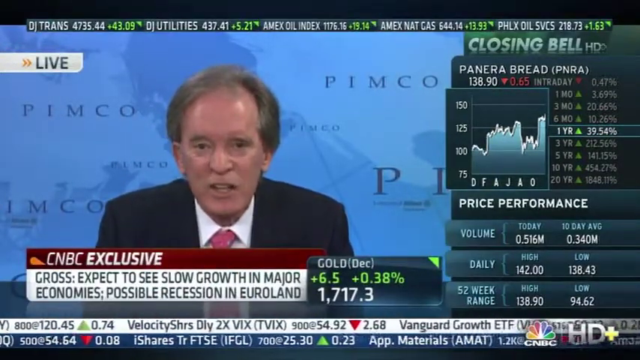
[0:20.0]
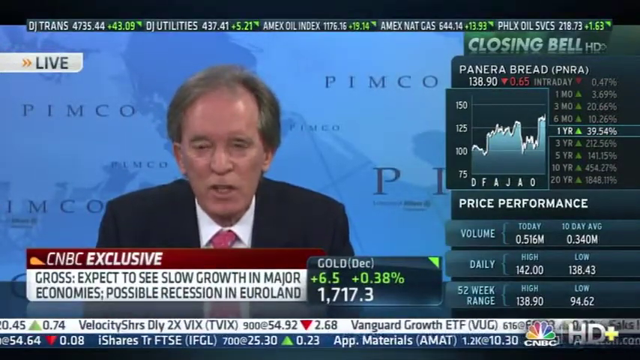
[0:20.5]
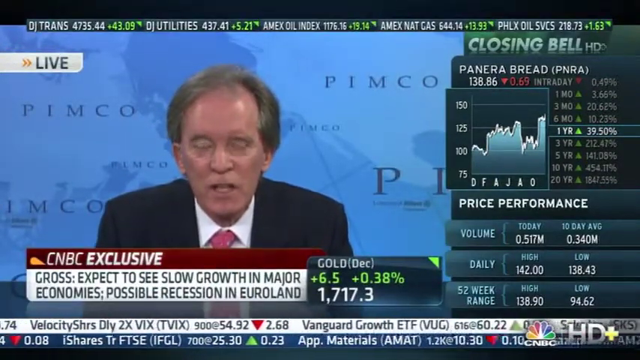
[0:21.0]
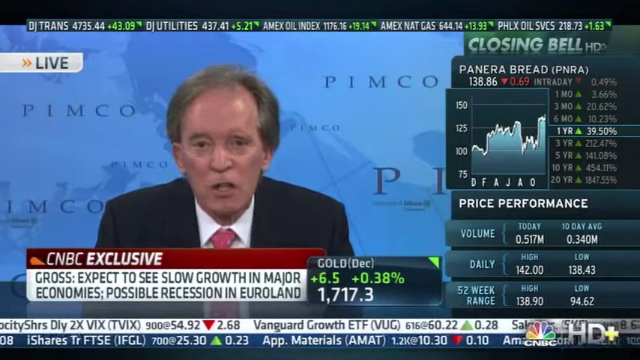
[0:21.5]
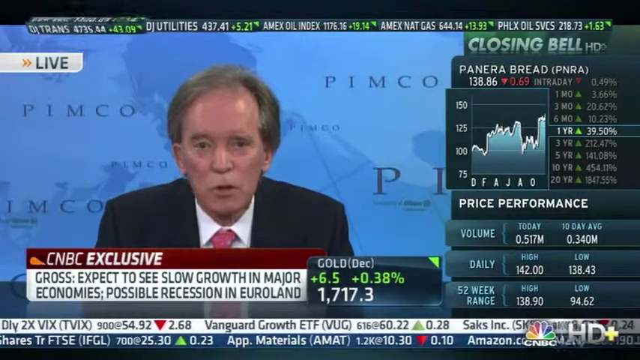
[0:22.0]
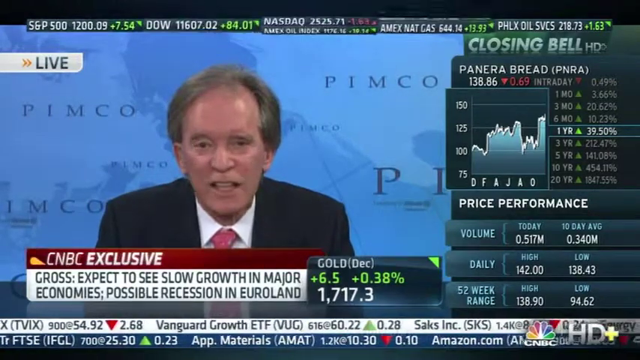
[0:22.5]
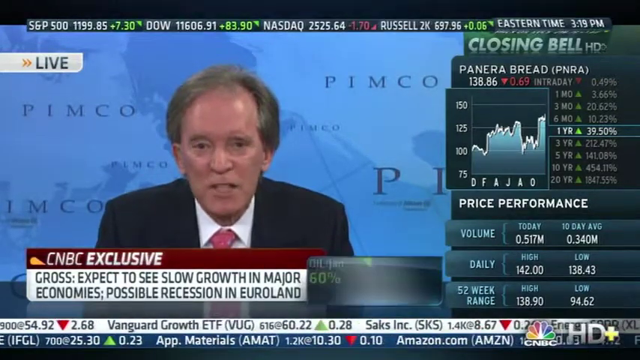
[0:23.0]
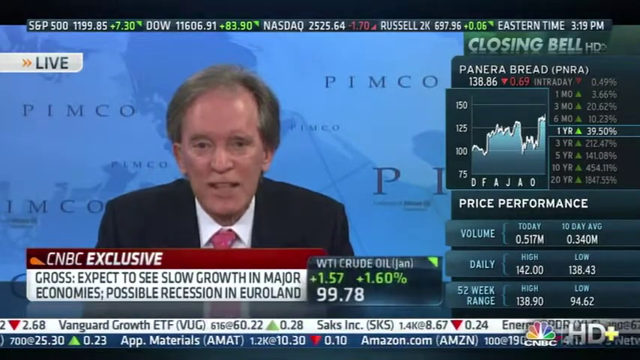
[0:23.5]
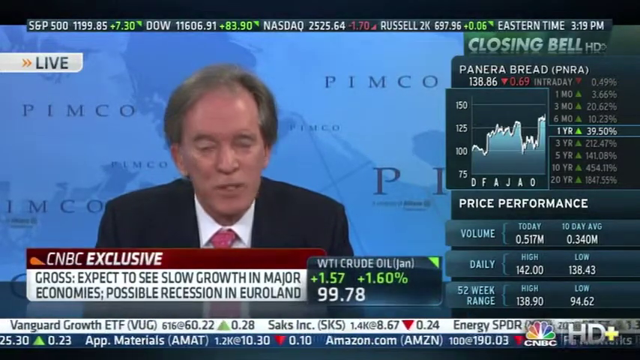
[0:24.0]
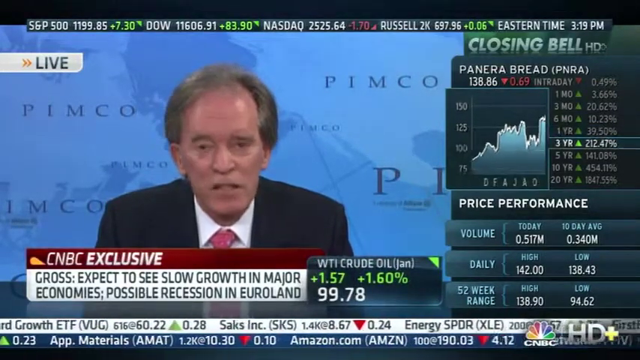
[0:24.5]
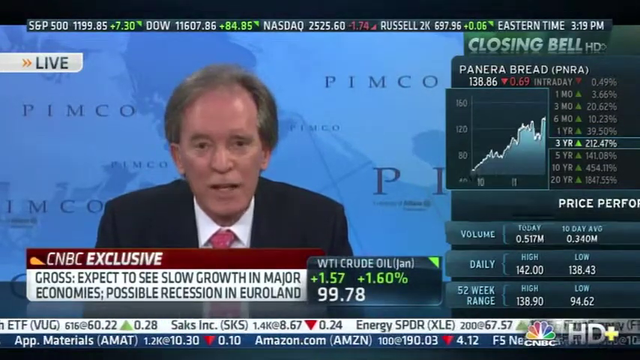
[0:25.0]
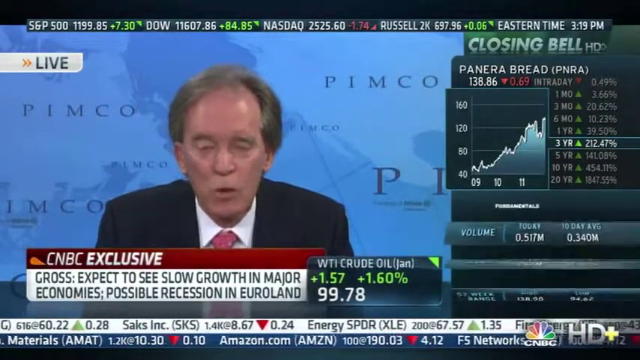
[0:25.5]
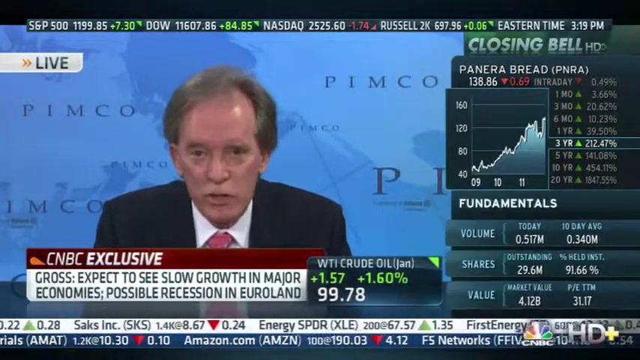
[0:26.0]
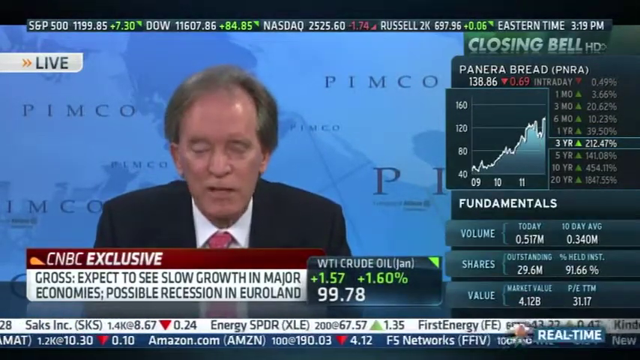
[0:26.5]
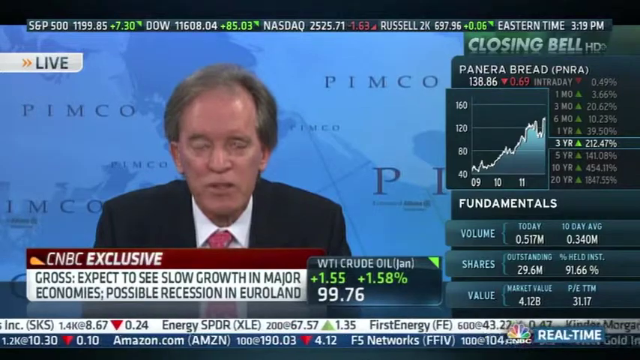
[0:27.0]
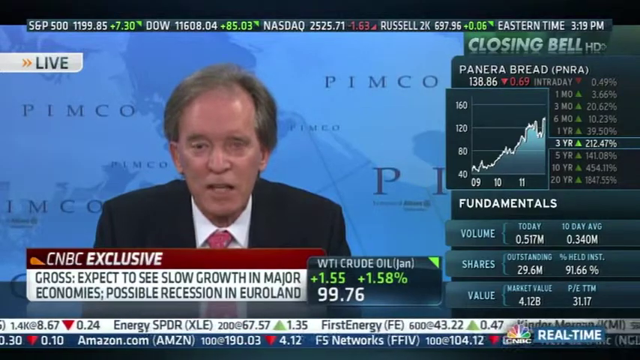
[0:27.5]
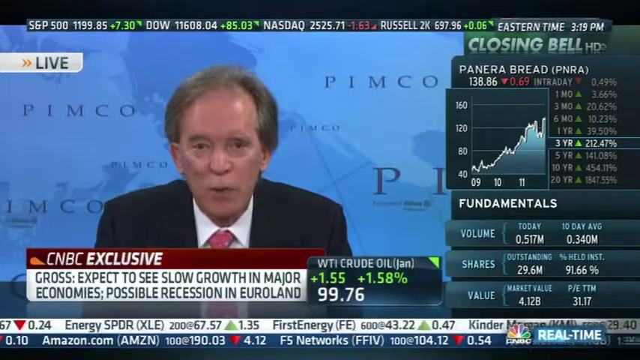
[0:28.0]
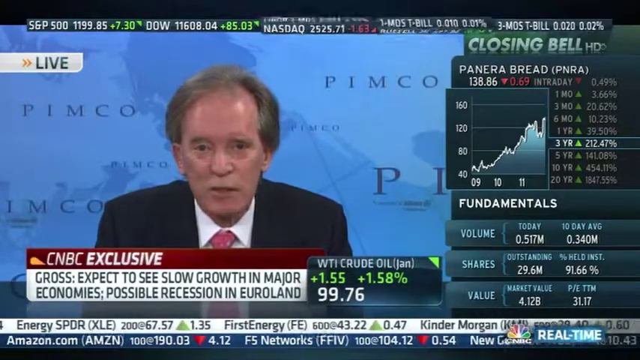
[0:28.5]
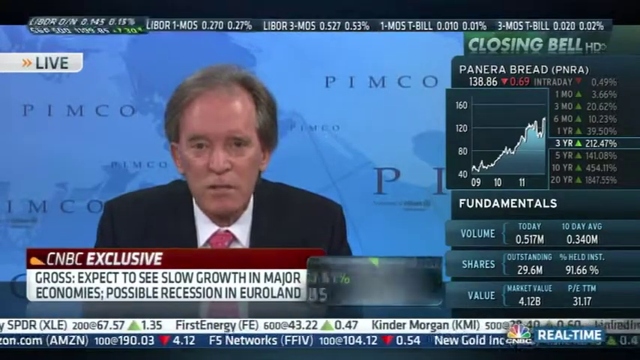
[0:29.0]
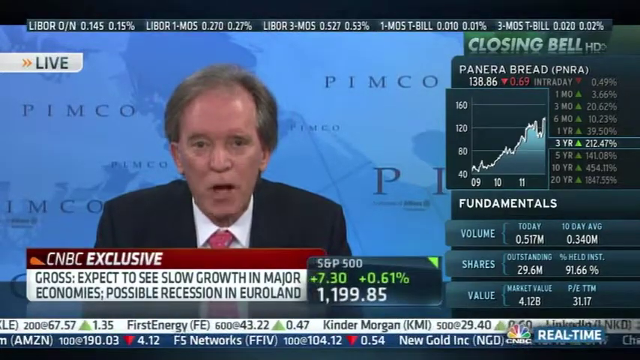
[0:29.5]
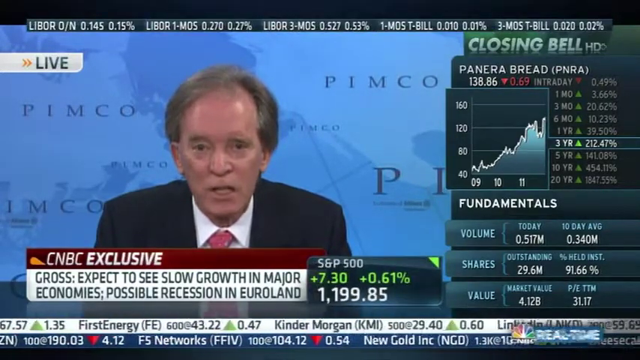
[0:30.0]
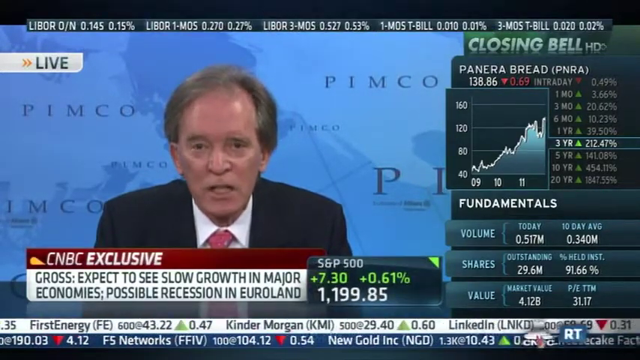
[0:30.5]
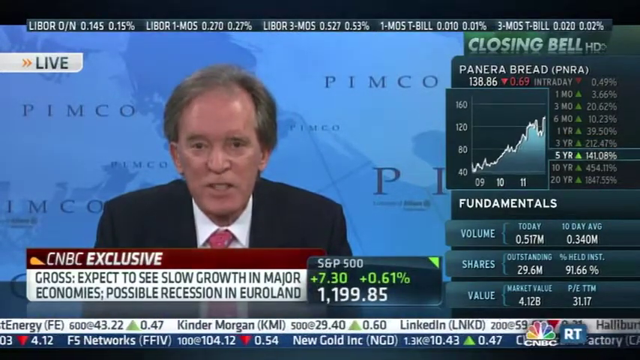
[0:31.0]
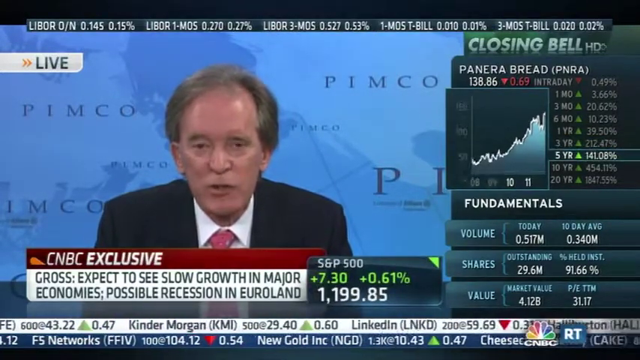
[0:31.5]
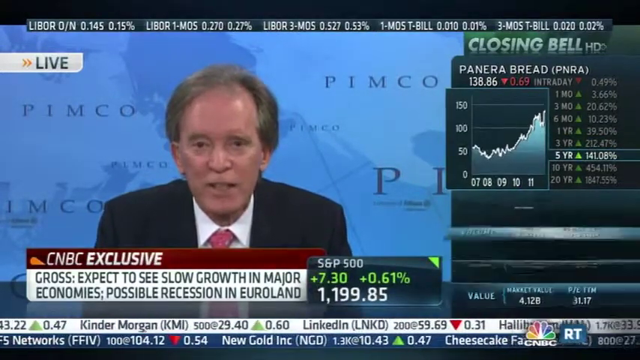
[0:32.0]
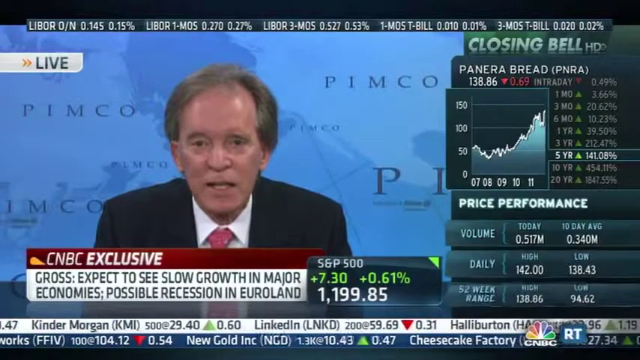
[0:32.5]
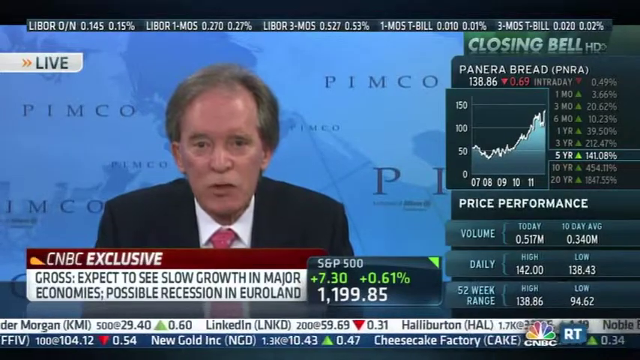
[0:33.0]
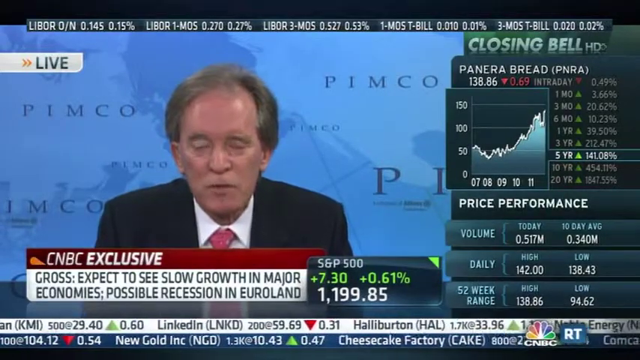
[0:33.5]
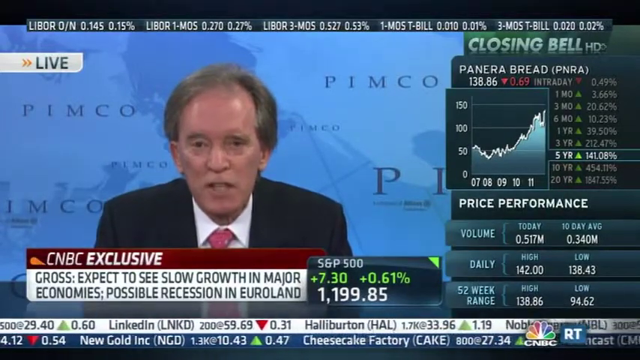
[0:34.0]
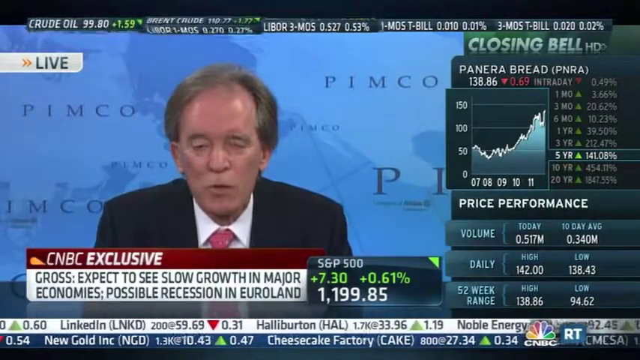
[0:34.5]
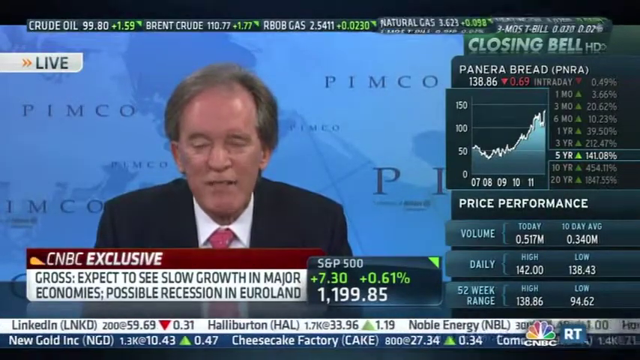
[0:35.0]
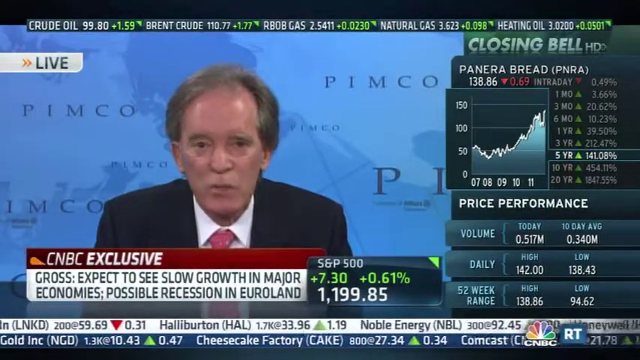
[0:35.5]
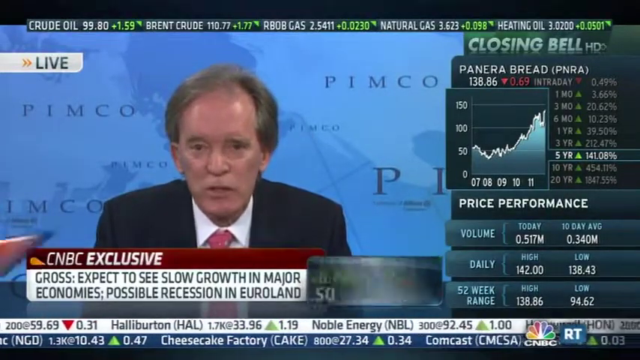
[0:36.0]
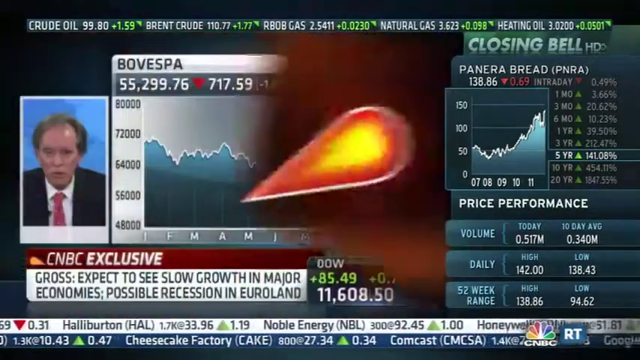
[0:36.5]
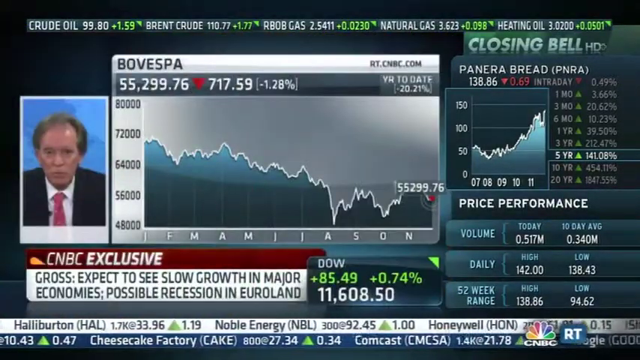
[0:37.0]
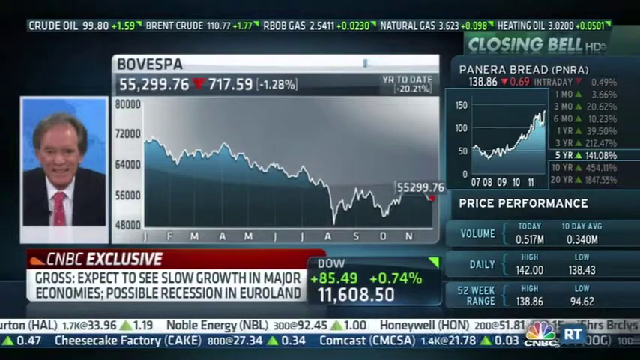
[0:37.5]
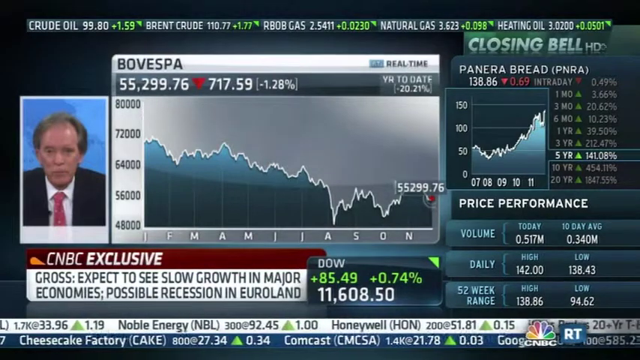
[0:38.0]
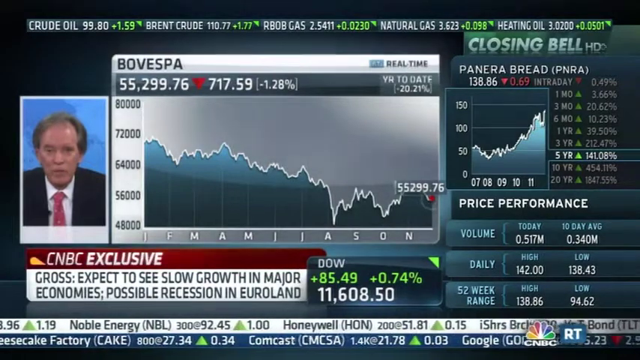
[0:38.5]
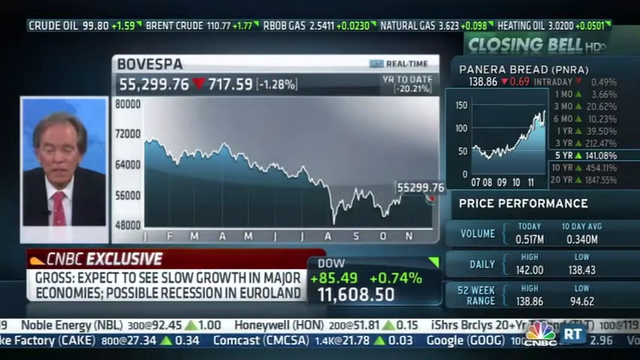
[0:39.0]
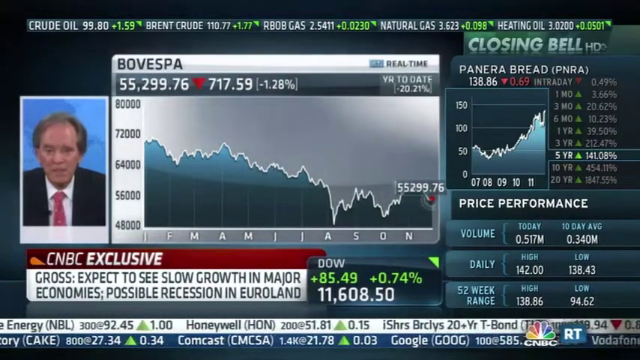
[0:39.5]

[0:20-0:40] On a dark-background presentation screen with a split-screen layout, scrolls run along the top and bottom. The top scroll has a dark background with text in white, green and red, probably showing stock market names such as S&P 500, Dow and NASDAQ. The bottom scroll has a white background with text in black, green and red showing the price movements of various shares, and it runs from right to left. The main screen is split into two. The left side shows a man in a formal suit facing the camera, giving an interview. Behind him are map-like patterns on a blue background with "PIMCO" written on it multiple times in varying sizes. There is a live tag in the left corner of this layout. Below the man, "CNBC exclusive" is written in white, and below that, on a white background, "gross: expect to see slow growth in major economies possibly recession in Euro land" is written in two left-aligned lines. To its right, an animation first shows gold price movement and then changes to WTI crude oil, given as 99.78 with a slight increase percentage written in green above it. The right-side panel has graphics and data on a dark background. The screen then transitions, and the main screen now shows the presenter's image on the left followed by a graph filled with dark blue, while the rest of the previous layout remains.